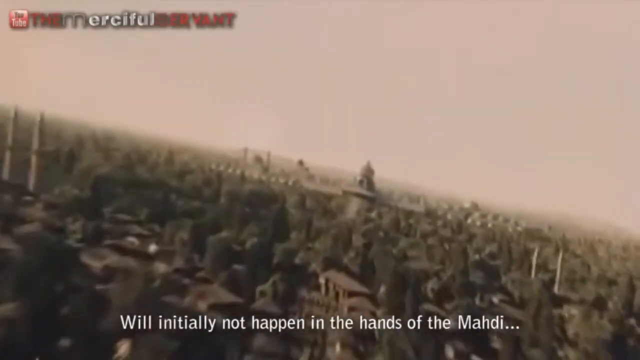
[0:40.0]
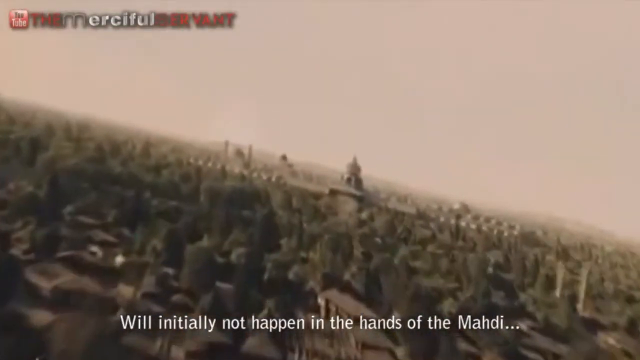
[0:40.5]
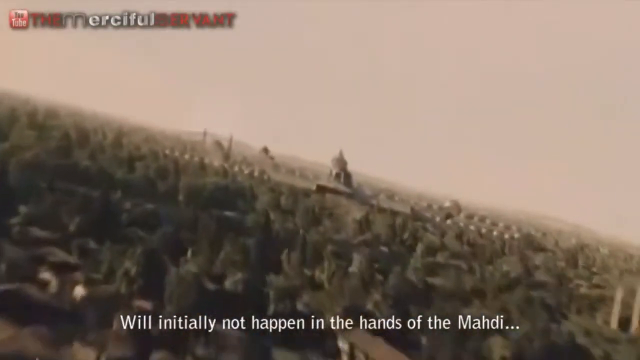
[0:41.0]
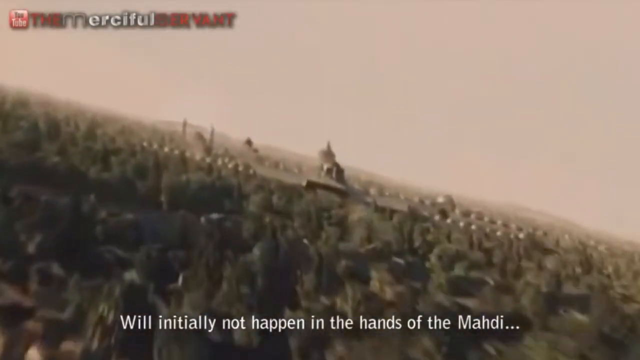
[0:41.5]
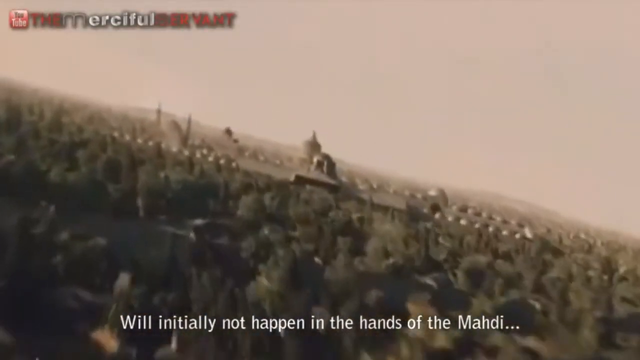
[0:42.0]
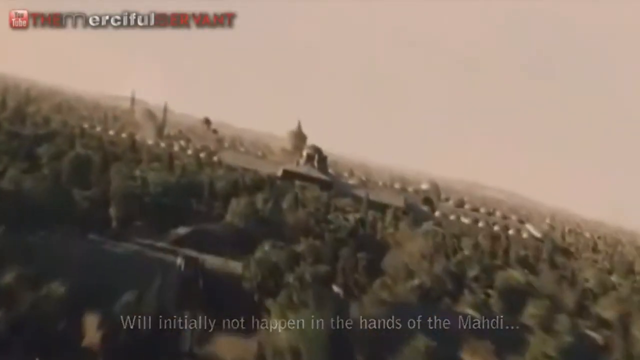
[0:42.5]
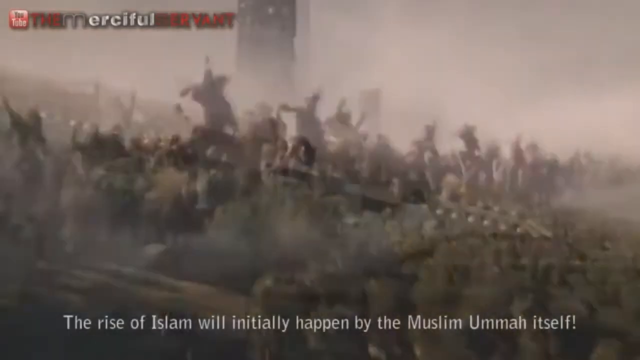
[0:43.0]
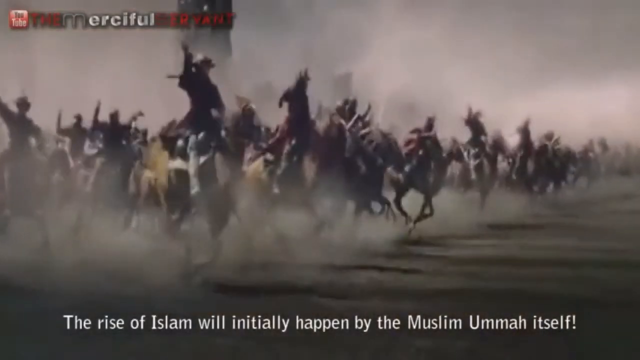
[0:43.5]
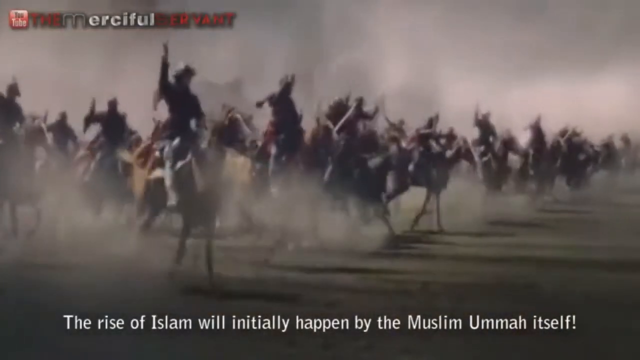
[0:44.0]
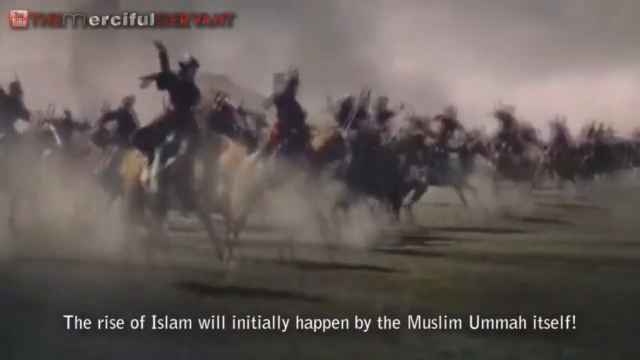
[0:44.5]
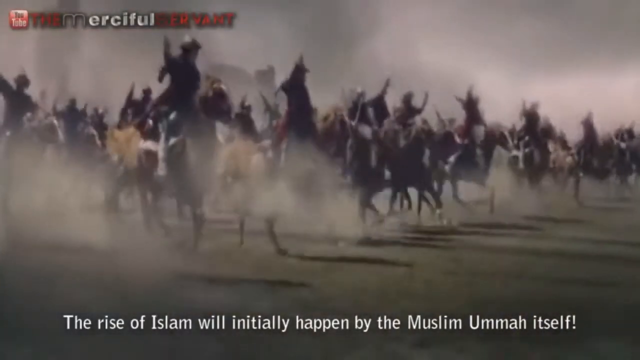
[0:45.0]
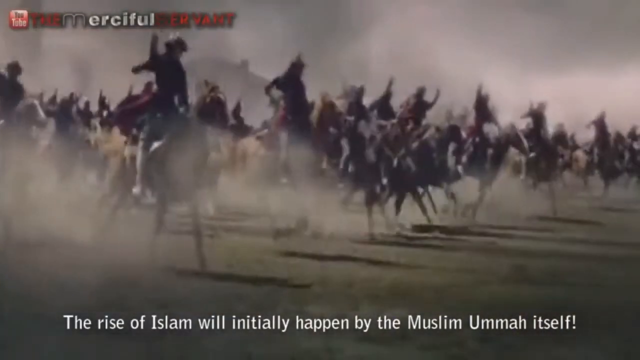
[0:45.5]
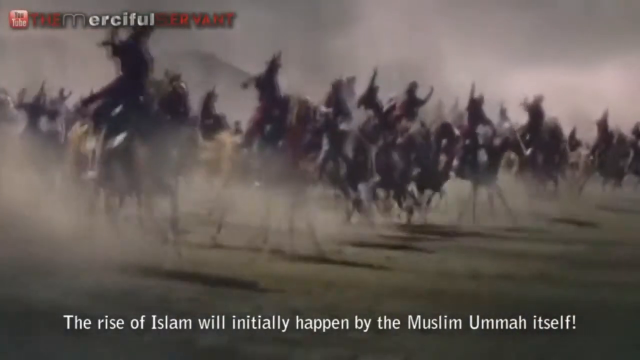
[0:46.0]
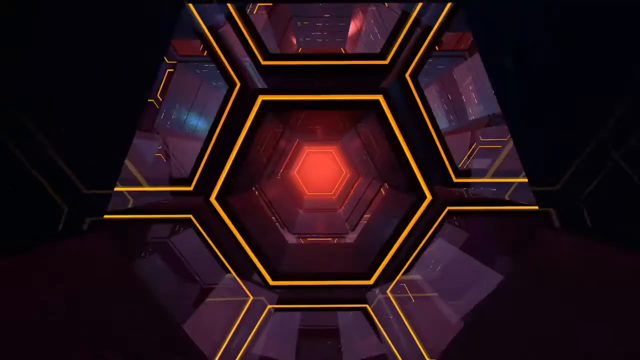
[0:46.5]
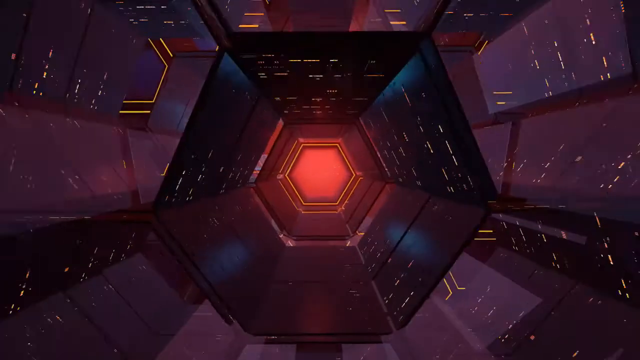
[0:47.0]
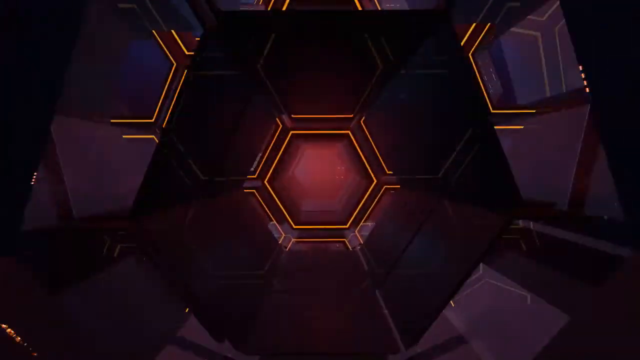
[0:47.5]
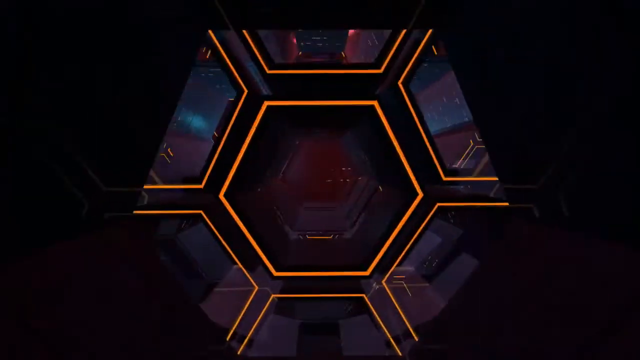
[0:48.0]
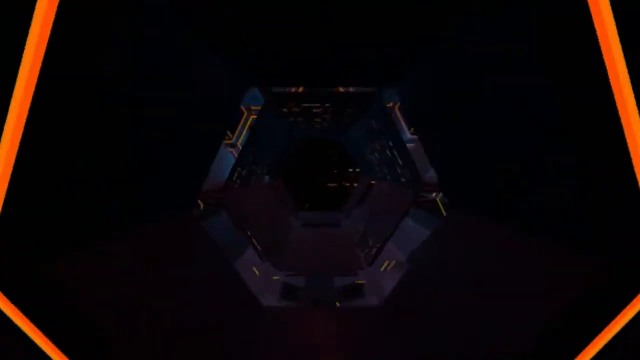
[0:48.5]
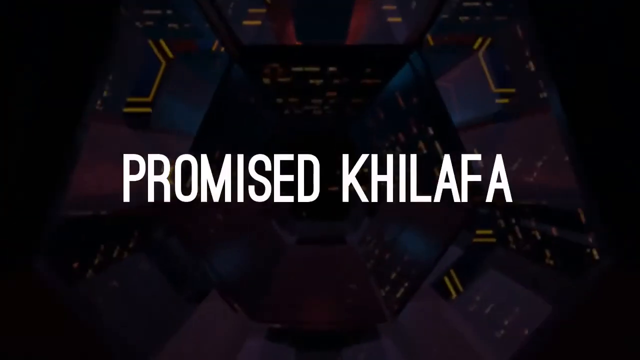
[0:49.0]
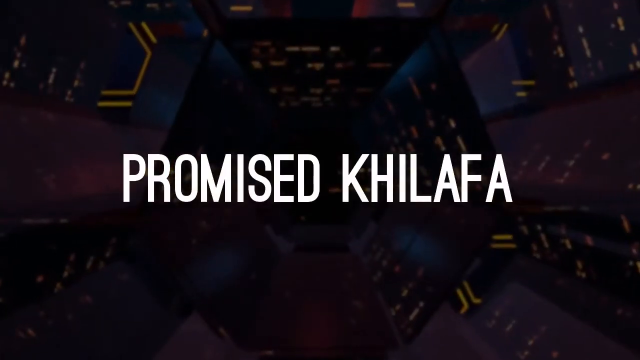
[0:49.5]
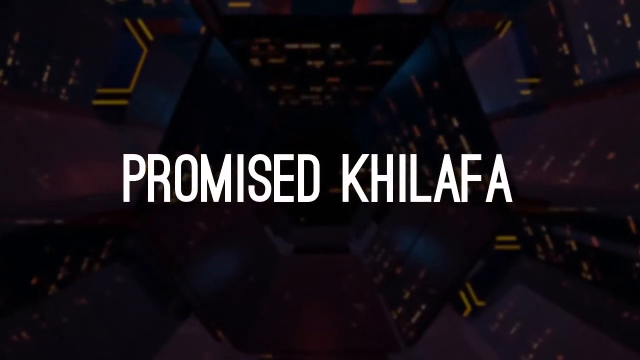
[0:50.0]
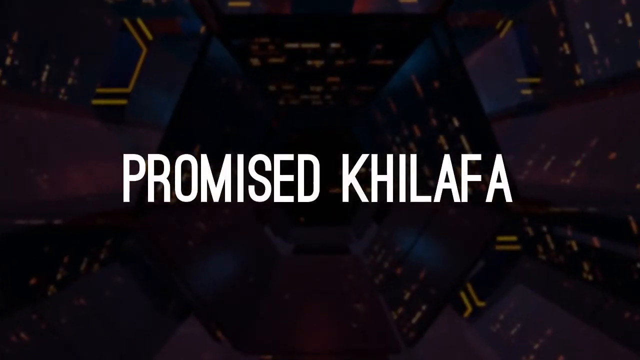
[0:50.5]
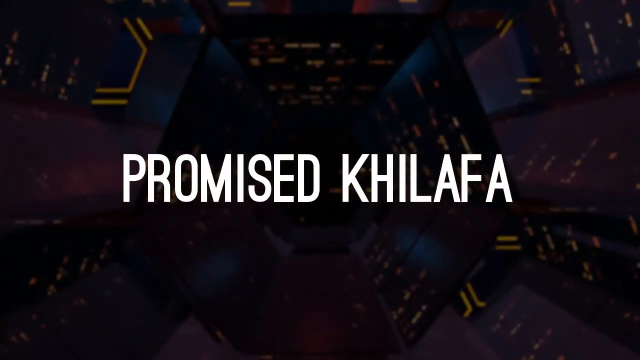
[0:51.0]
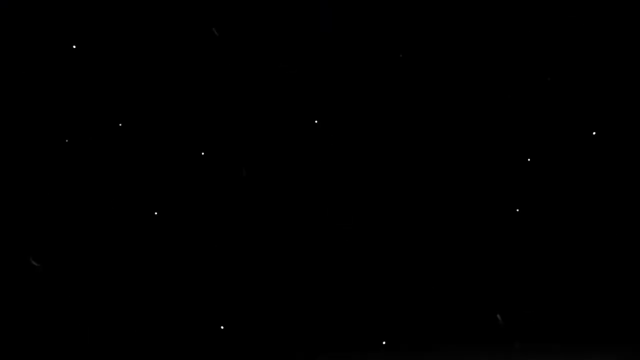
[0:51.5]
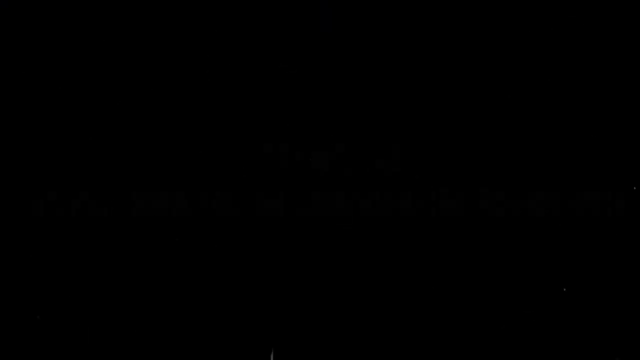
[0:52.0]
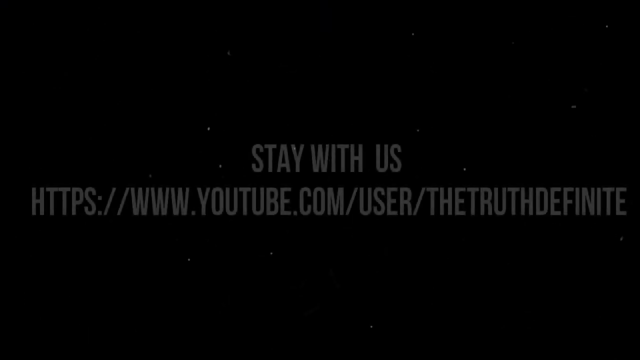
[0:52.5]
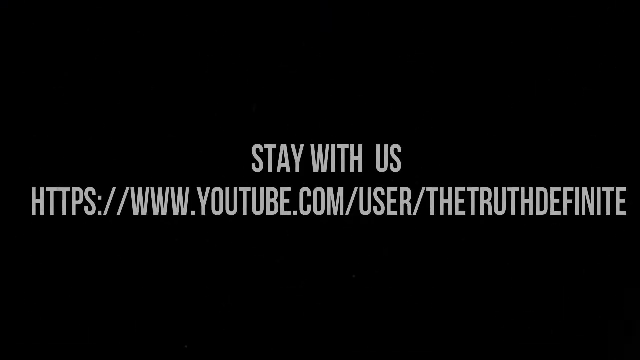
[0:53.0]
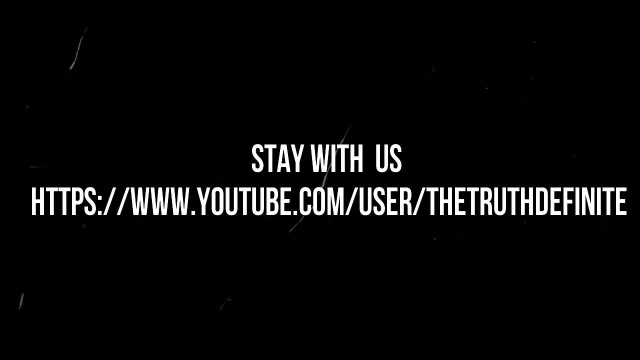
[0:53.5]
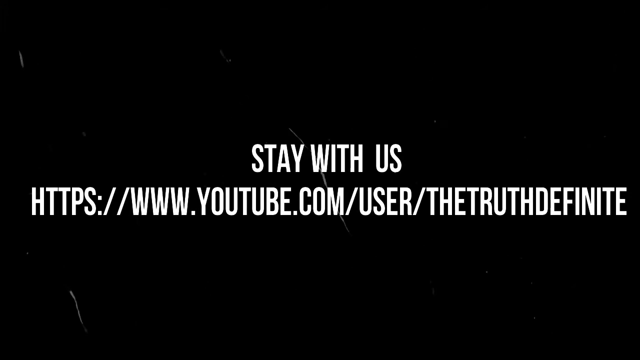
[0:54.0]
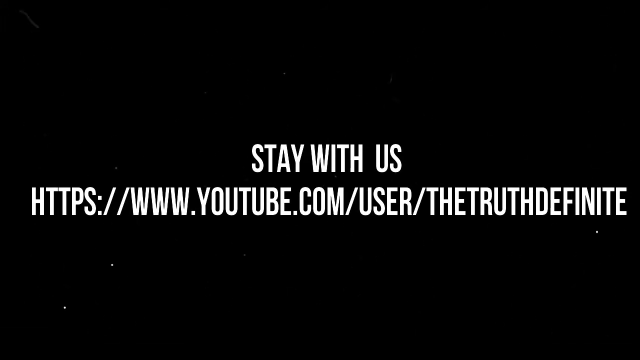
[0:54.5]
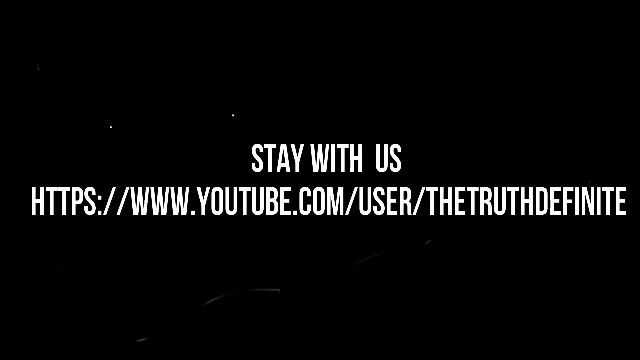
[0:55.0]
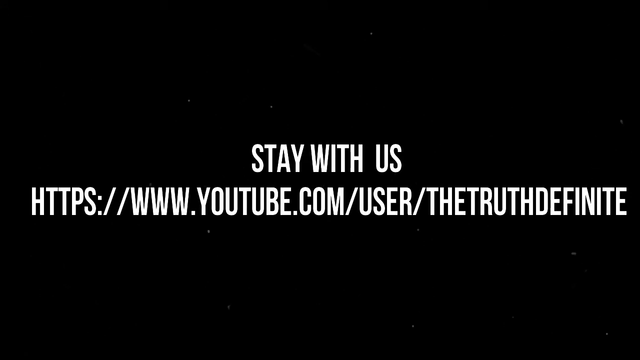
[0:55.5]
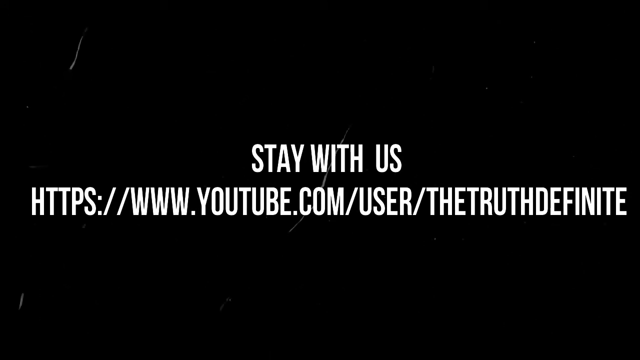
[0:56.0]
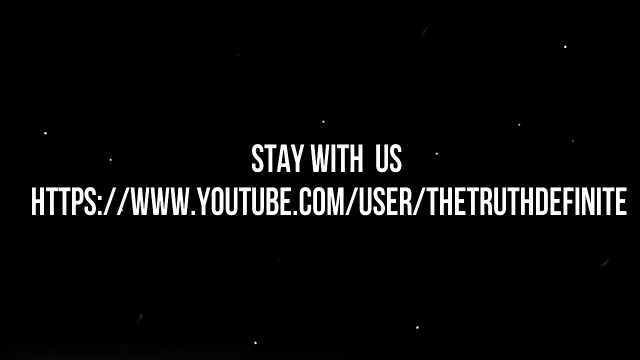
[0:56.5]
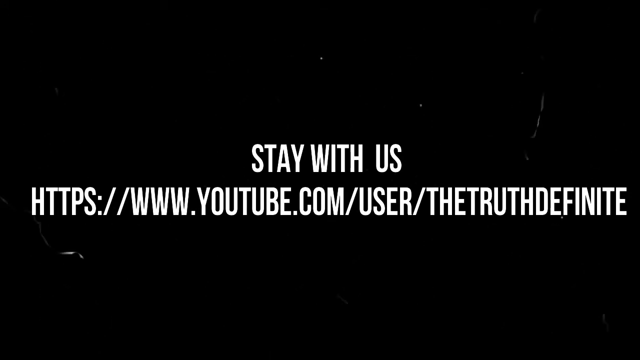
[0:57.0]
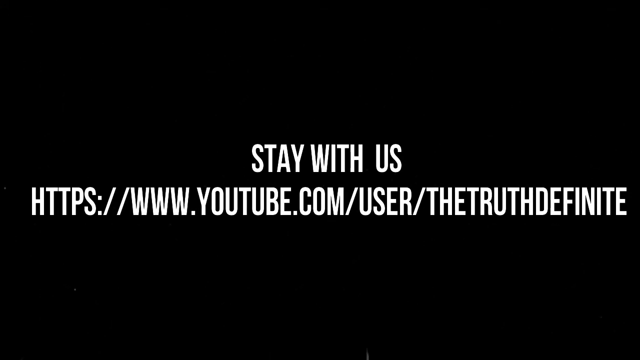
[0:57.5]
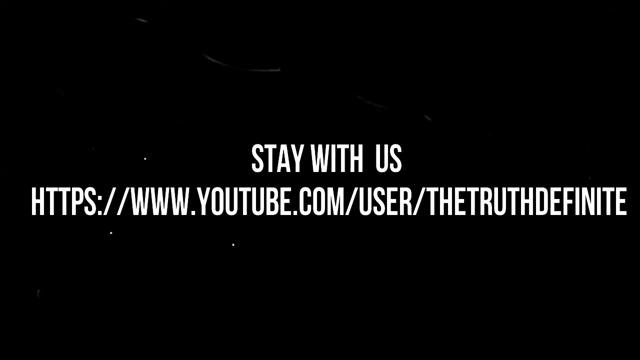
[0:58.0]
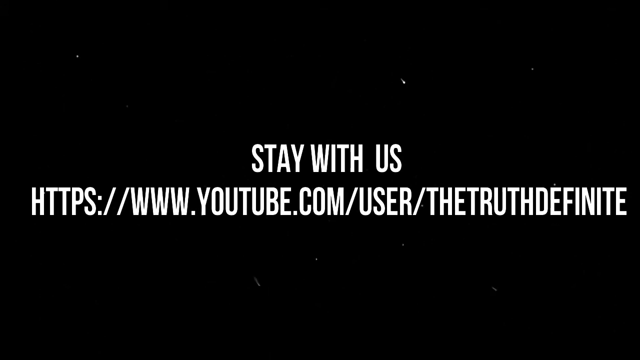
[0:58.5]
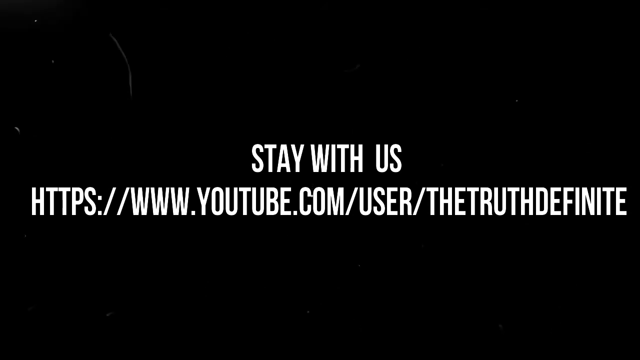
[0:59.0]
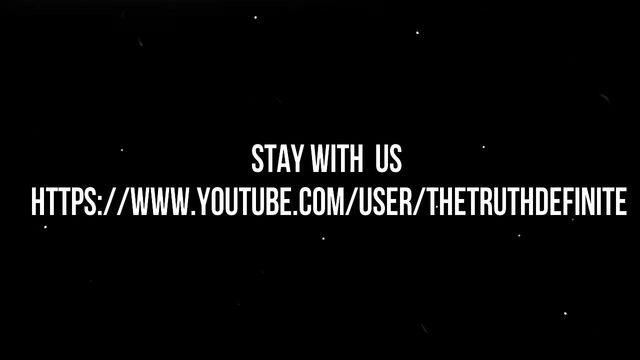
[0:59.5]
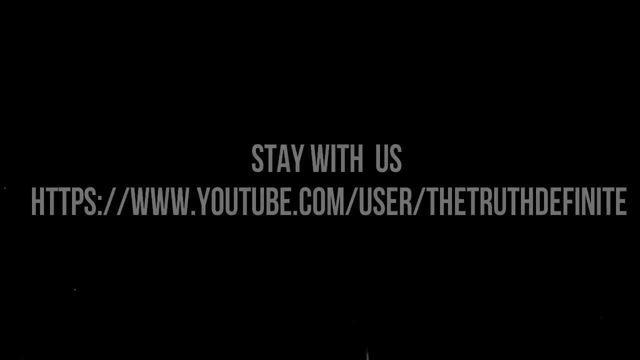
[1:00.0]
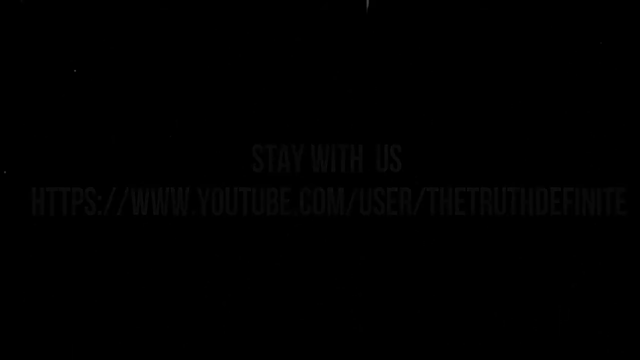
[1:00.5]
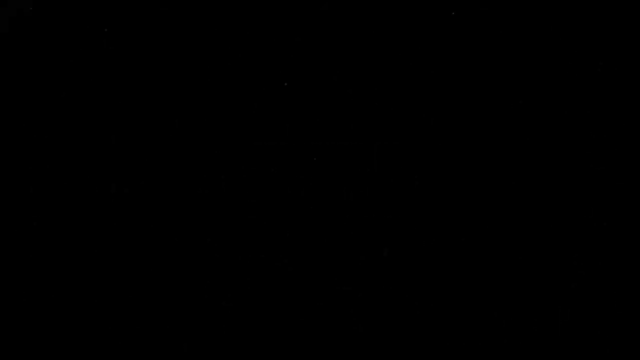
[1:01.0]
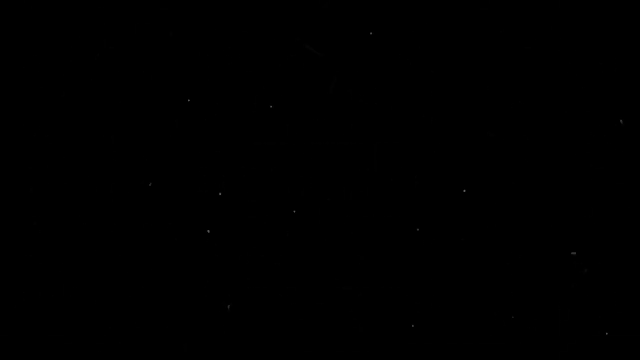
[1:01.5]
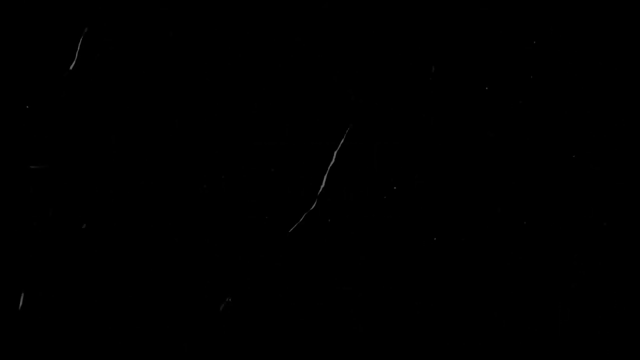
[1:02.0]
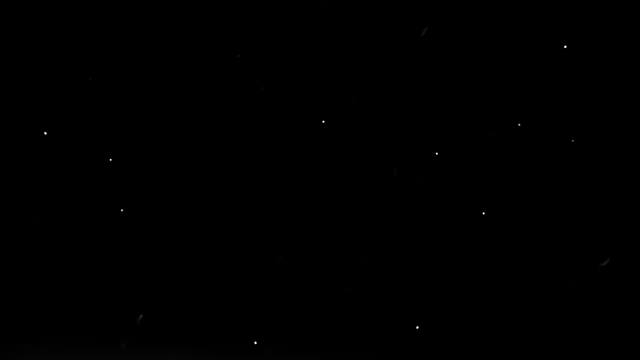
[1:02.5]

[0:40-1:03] The video shows the country, with a lot of castles and houses. Soldiers on horses patrol, and dust rises as the soldiers march; they look like they are in rows. The coloring in the background is quite gray, with some light showing. Text at the bottom of the screen says "the rise of Islam will initially happen by the Muslim Umman itself." The video then goes into a type of kaleidoscope picture, and at the end it says "PROMISED KHILAFA." Viewers are asked to "stay with us," and a website for the YouTube channel is given.